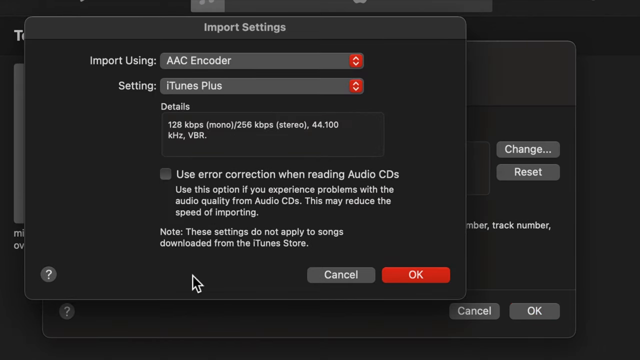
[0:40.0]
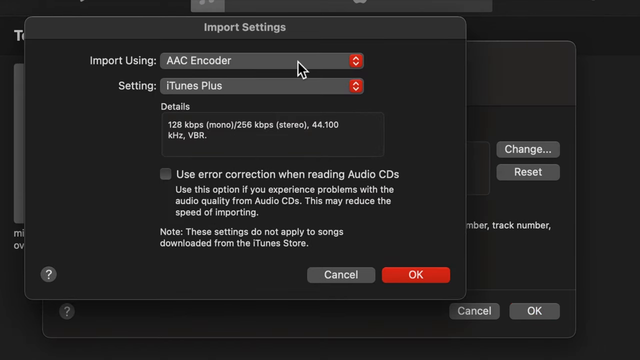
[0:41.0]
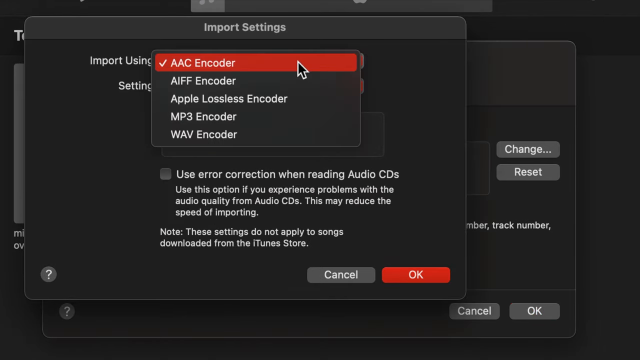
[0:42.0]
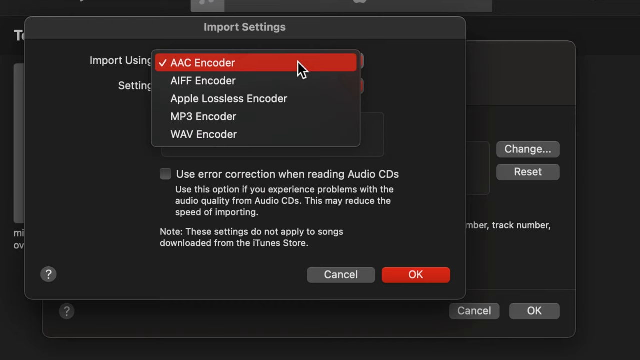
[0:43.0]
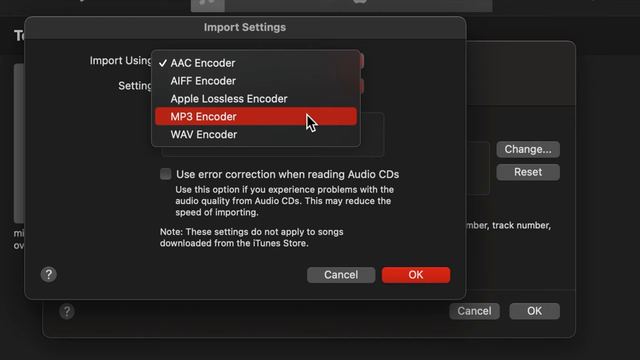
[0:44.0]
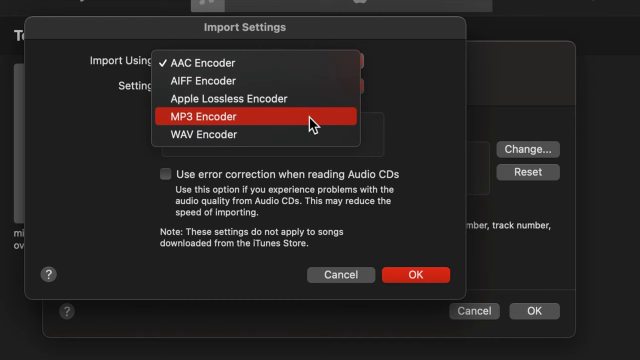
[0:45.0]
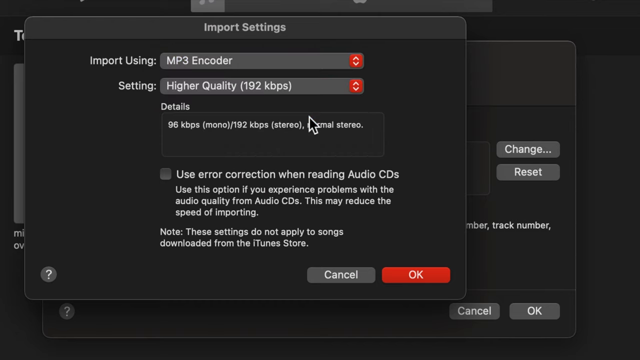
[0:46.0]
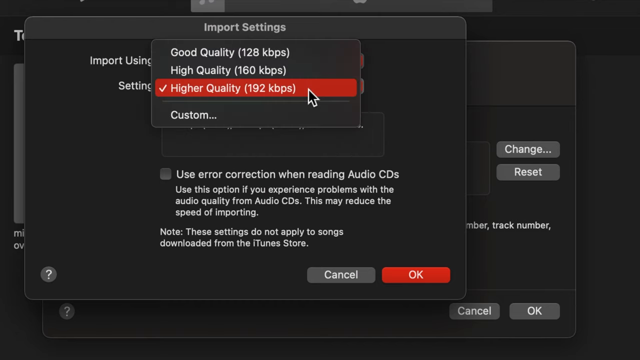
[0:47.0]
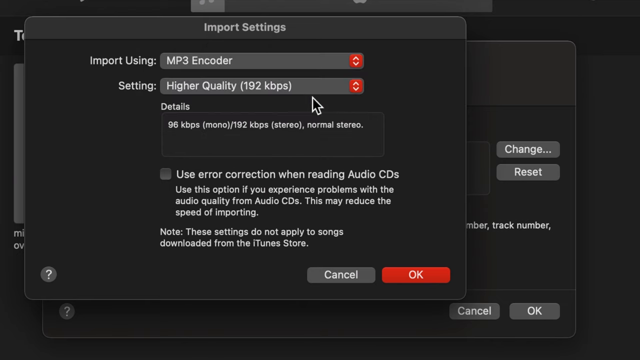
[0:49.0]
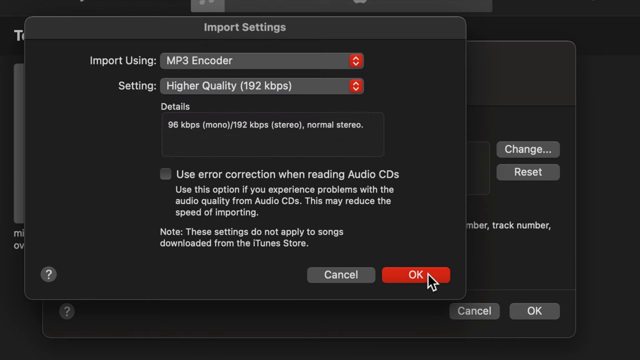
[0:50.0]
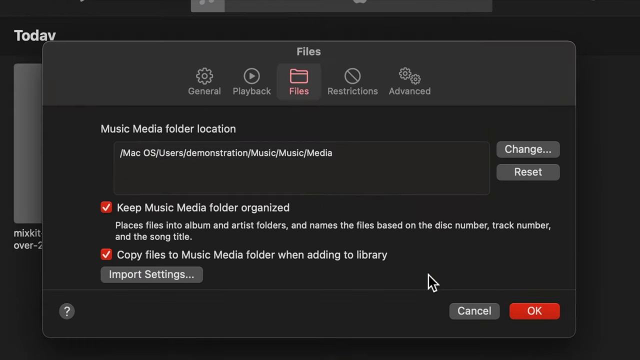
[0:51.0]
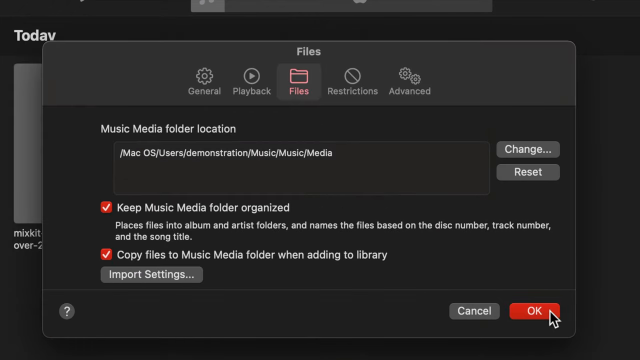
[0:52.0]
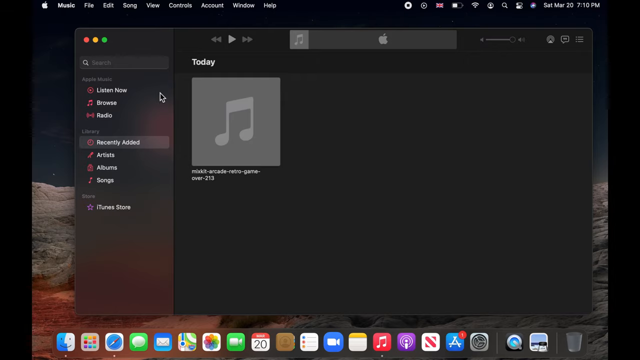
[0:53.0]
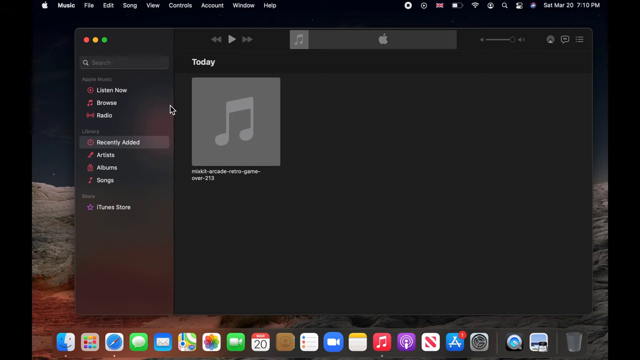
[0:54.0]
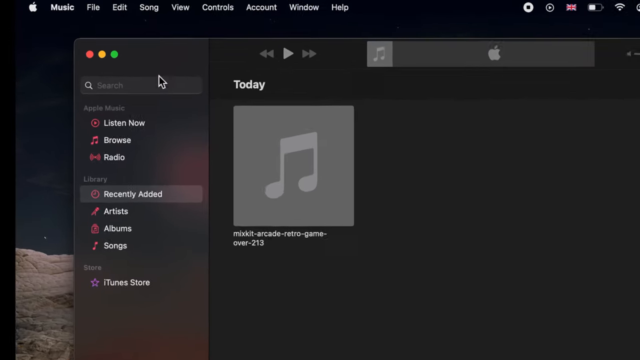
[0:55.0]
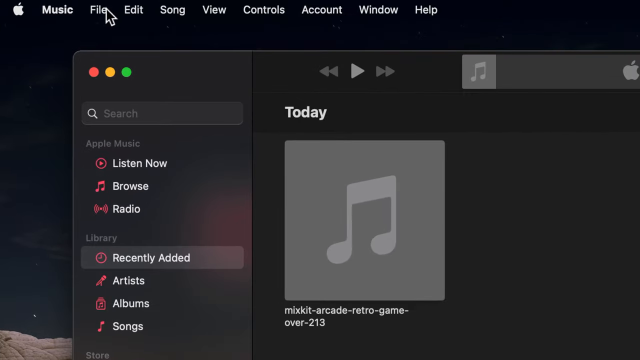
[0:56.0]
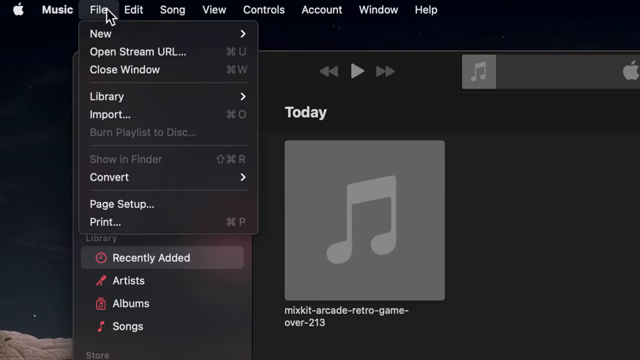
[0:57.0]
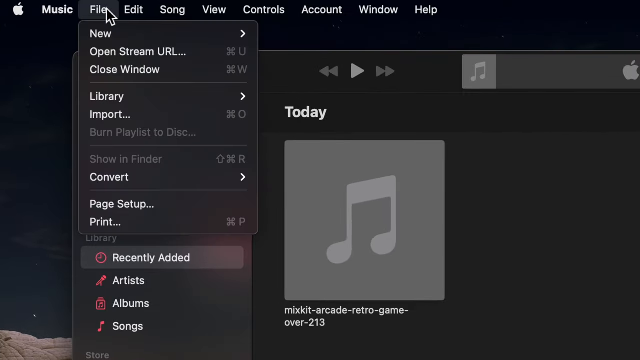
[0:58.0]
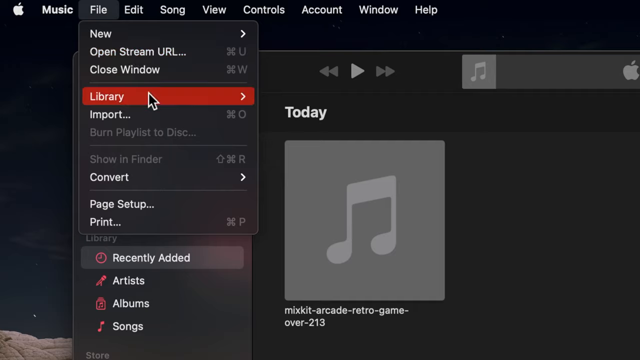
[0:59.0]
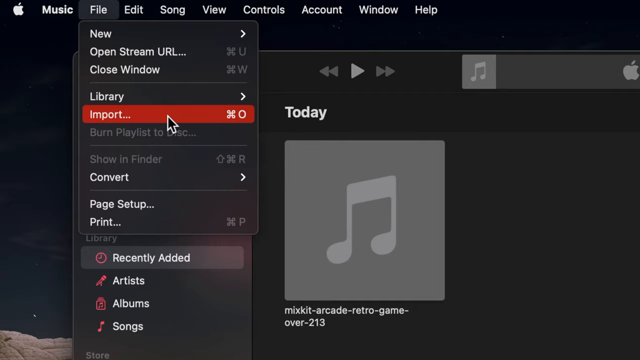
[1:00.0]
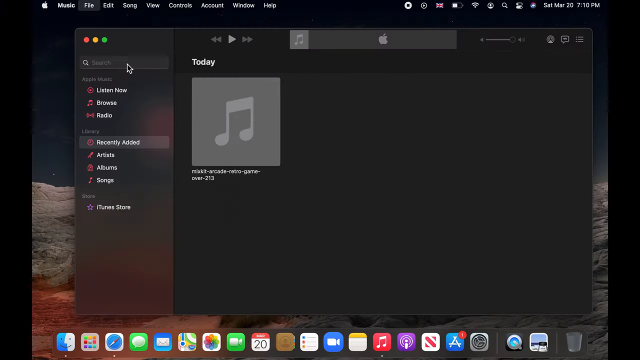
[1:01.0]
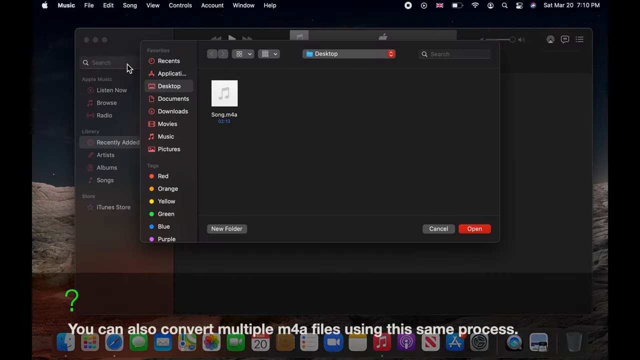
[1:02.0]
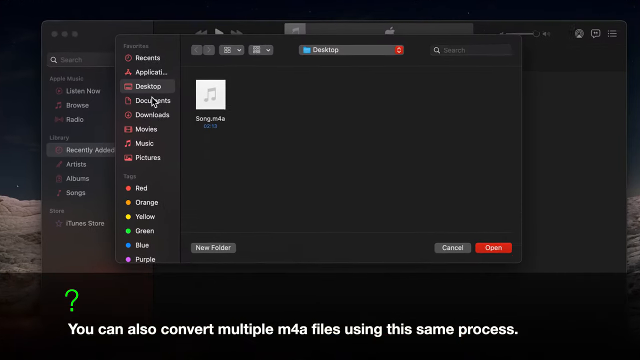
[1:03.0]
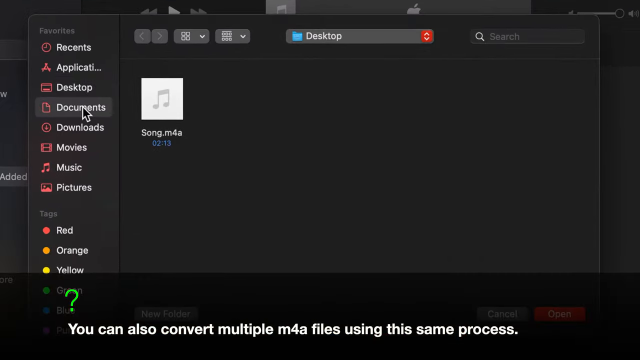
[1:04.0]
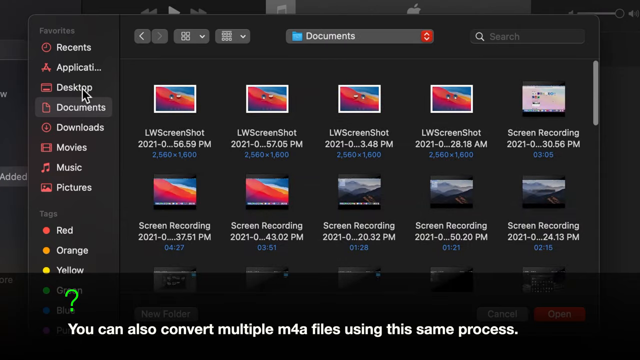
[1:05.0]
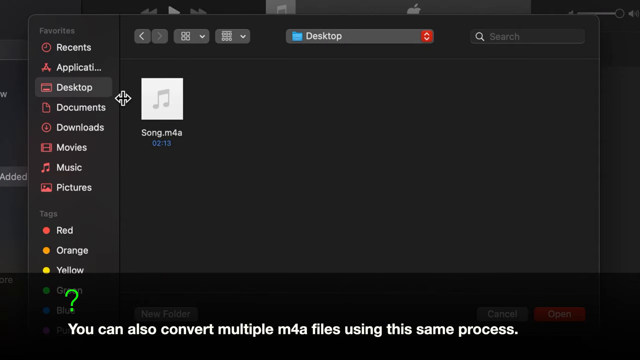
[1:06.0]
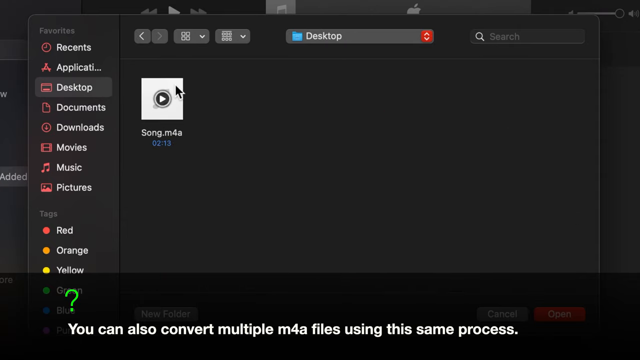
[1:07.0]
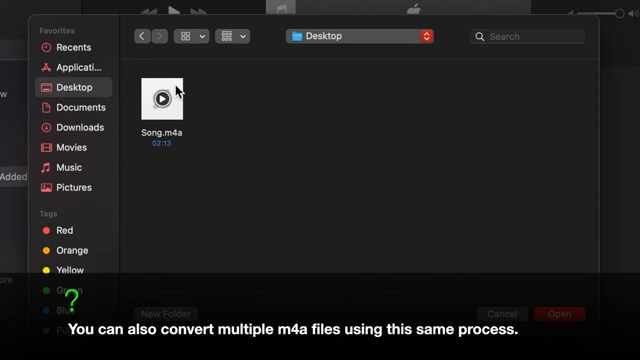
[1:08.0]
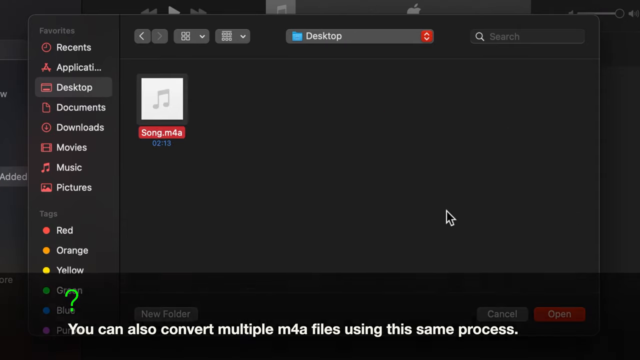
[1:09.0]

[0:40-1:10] A window that says "Import Settings" is open. It offers an Import Using option set to AAC Encoder and a Setting option with iTunes Plus selected, with details reading "128kb per second, mono, 256kb stereo". There is a checkbox that says "Use Error Correction When Reading Audio CDs." The user seems to choose MP3 Encoder for Import Using, changes the setting to Higher Quality, 192kb per second, and clicks OK, then clicks OK again to close both windows. He then goes to File at the top left and chooses Import. In the file window, with Desktop, Documents, Downloads, Movies and Music listed, he goes to Desktop, selects Song.m4a and clicks OK.